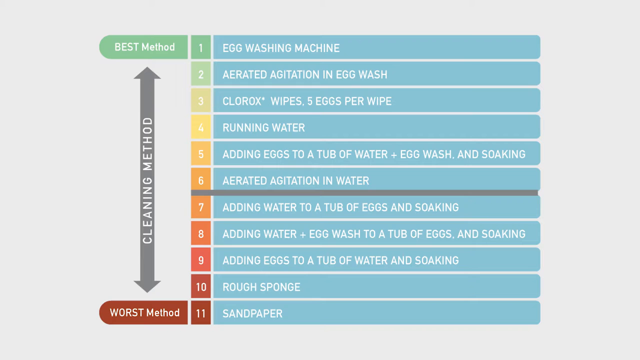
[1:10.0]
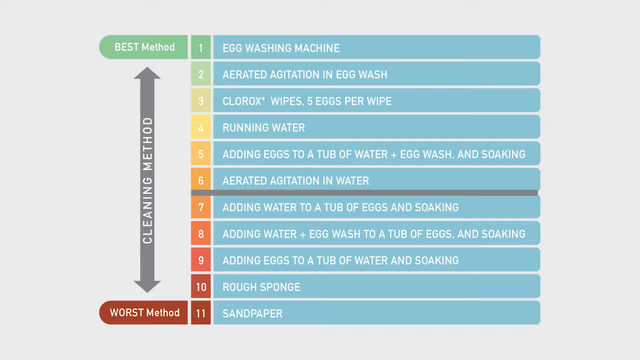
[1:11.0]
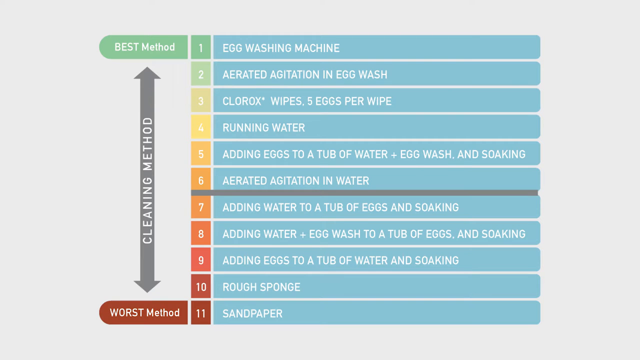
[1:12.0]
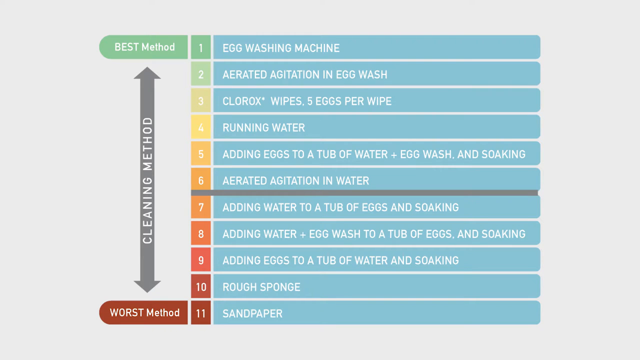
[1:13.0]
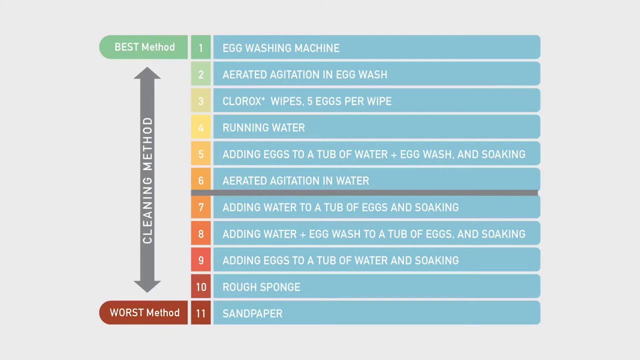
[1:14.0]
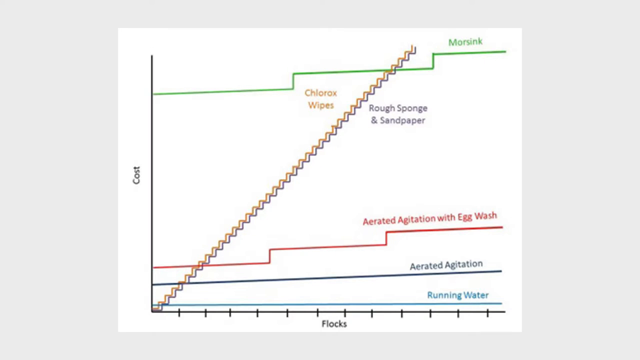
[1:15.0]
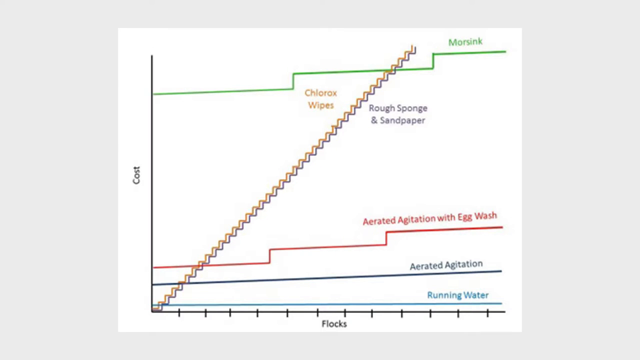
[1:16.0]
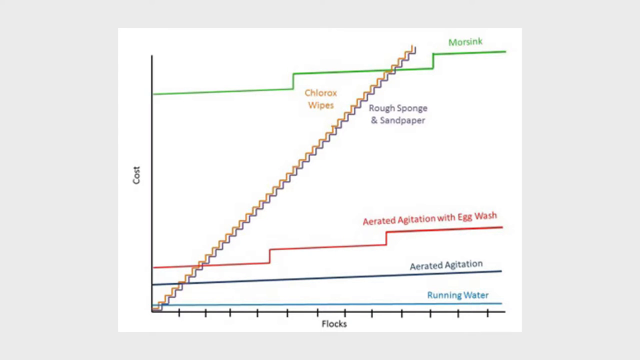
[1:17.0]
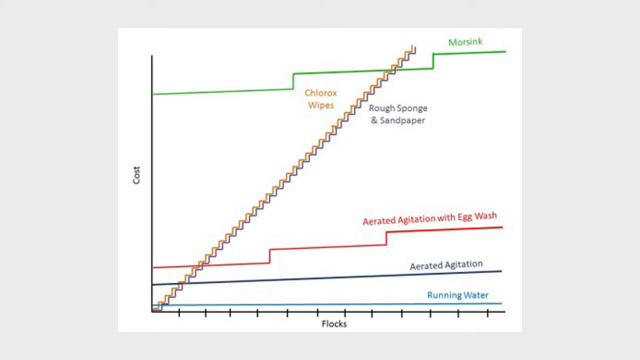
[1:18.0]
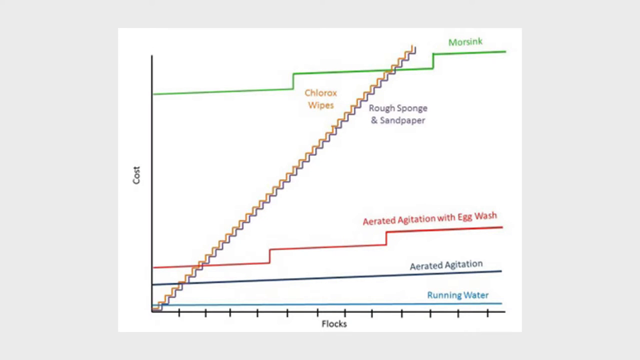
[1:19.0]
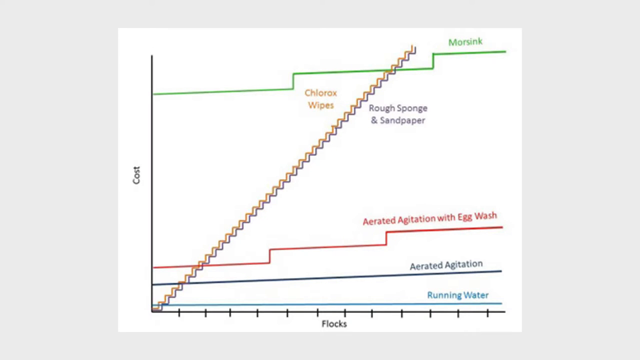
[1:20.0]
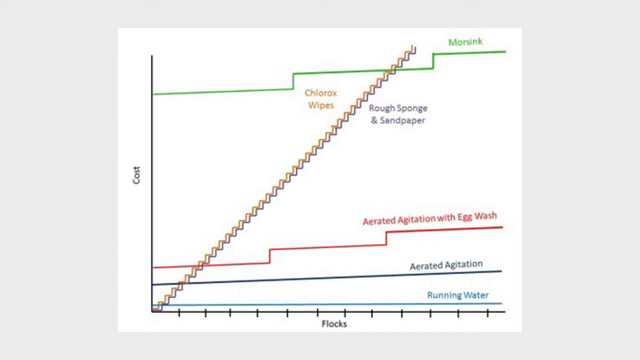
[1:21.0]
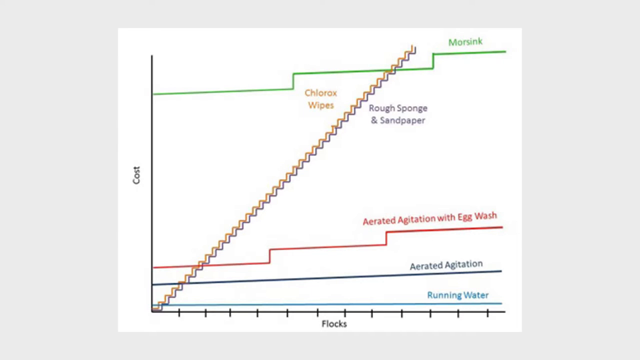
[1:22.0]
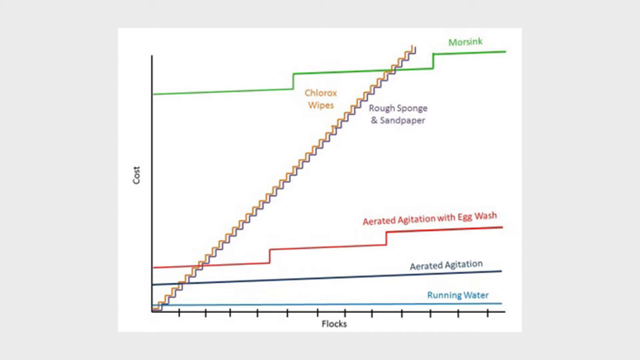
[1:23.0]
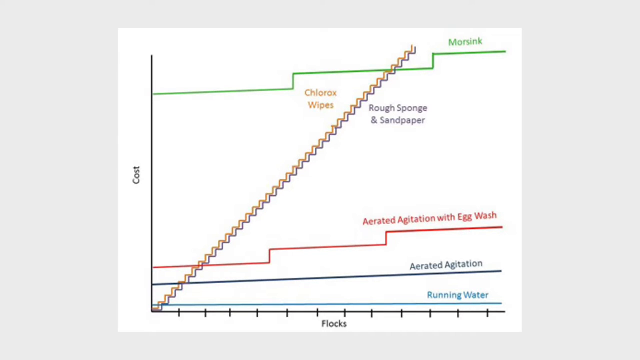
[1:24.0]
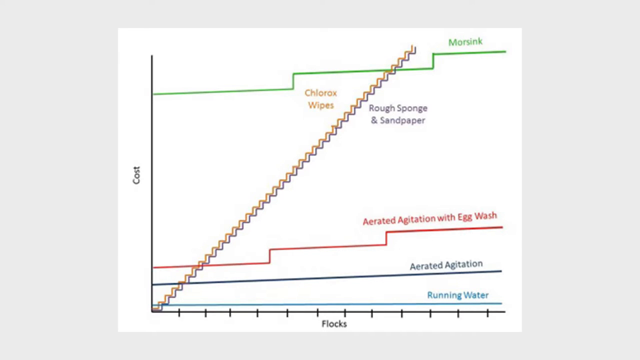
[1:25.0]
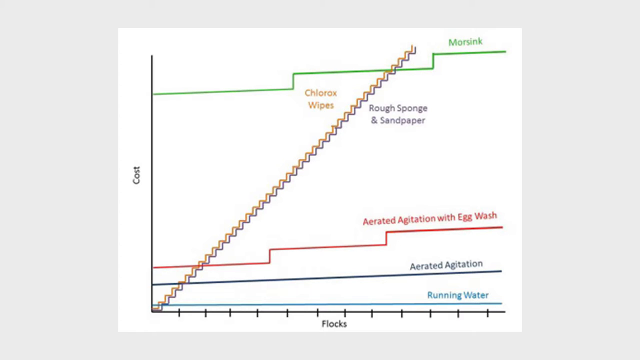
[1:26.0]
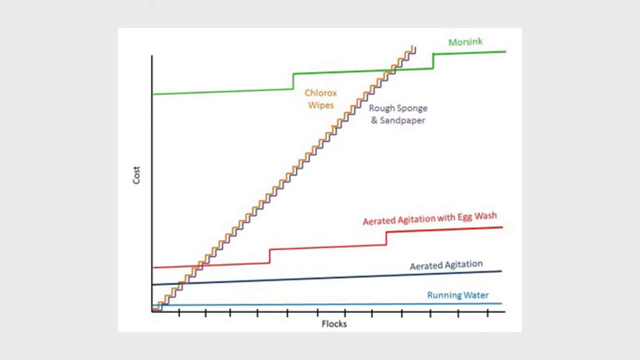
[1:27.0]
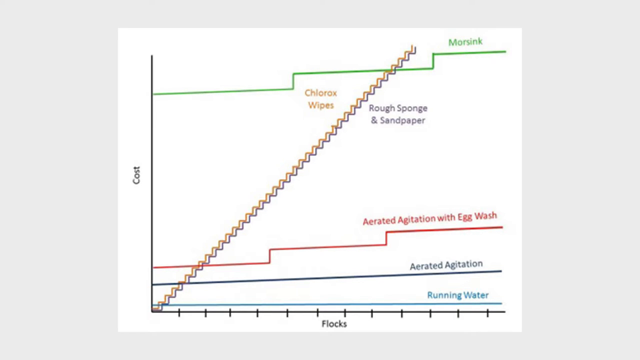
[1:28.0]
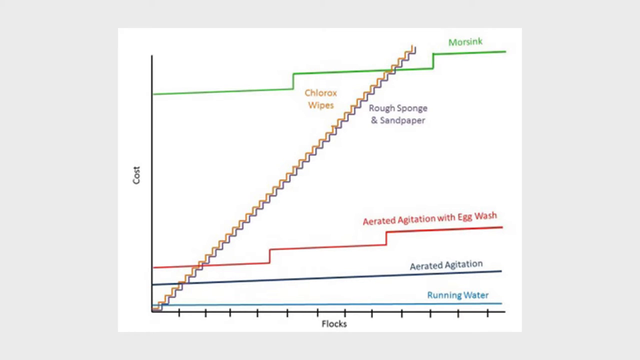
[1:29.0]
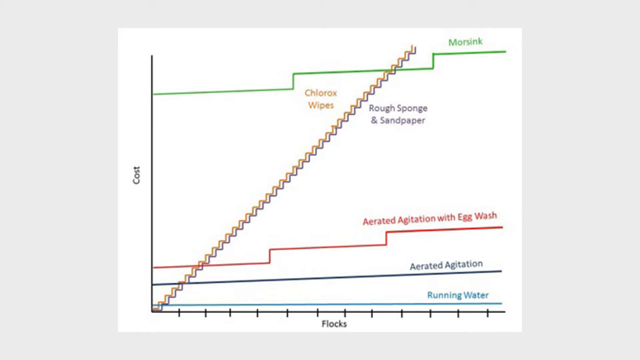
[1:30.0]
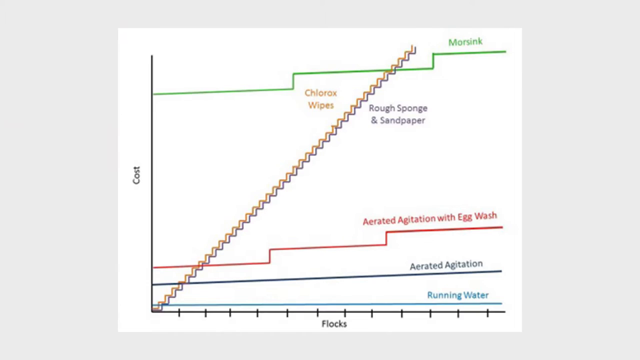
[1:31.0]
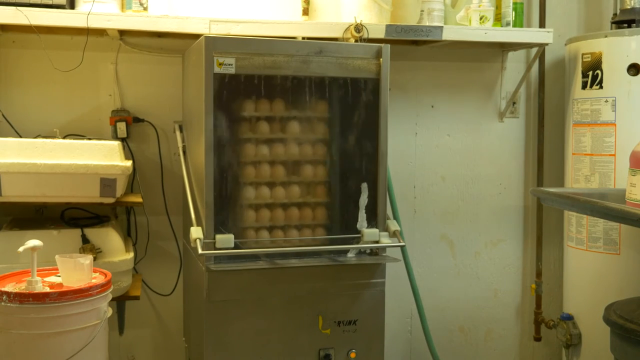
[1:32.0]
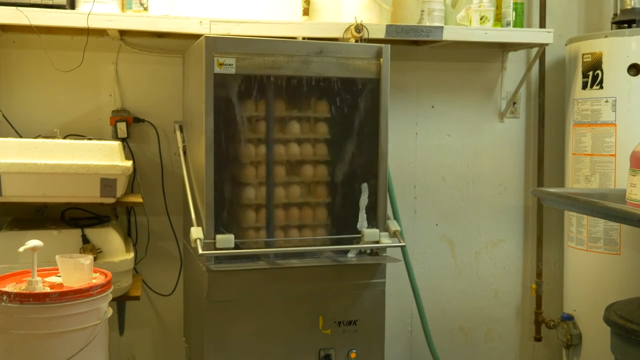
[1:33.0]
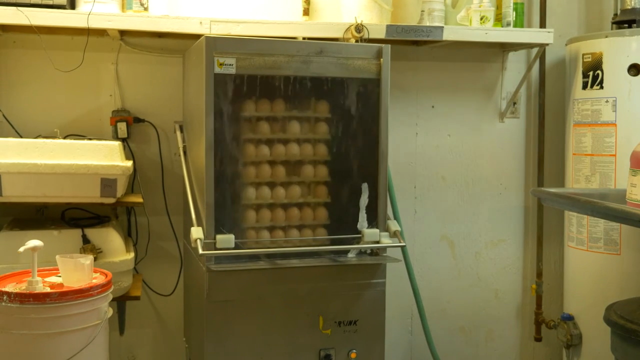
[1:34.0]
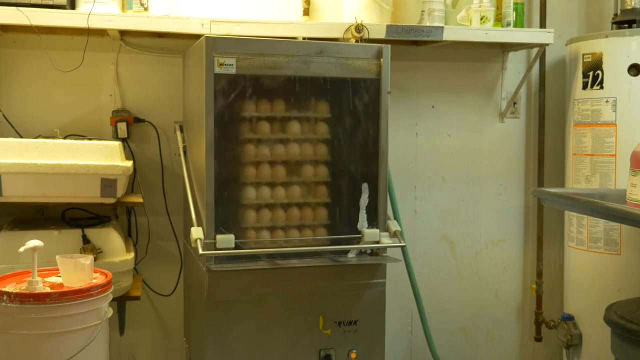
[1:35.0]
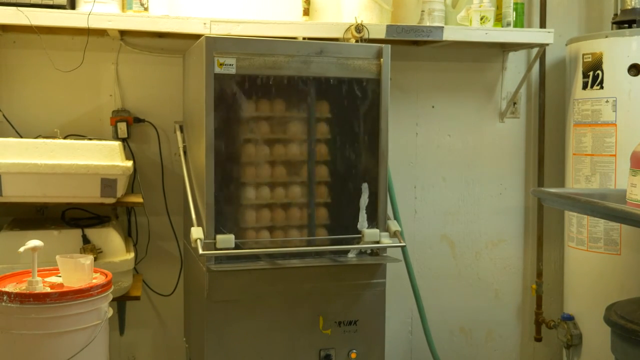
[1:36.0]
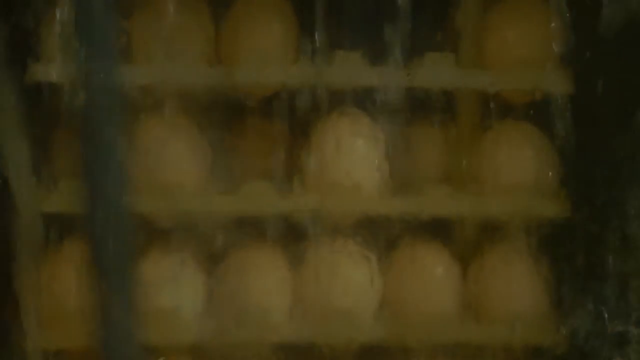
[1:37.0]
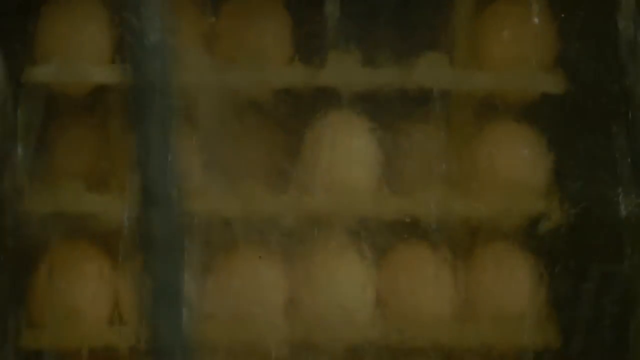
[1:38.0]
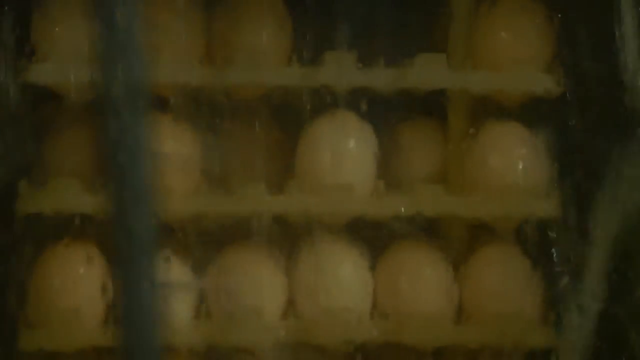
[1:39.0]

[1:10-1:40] On an off-white background, a green box above has white lettering reading "best method." Just below, a gray arrow pointing up and down has white lettering reading "cleaning method," and the red section at the bottom reads "worst method" in white lettering. Blue boxes on the right side have white lettering running down: "egg wash machine, aerated agitation and egg wash, Clorox wipes five eggs per wipe, running water, adding eggs to a tub of water plus egg wash and soaking, aerated agitation and water, adding water to a tub of eggs and soaking, adding water plus egg wash to a tub of eggs and soaking, adding eggs to a tub of water and soaking, rough sponge, sandpaper." The colors run from green through yellow and orange to red at the very bottom, with numbers 1 to 11. Next, a white squared section in the center shows a graph. A black line on the left side says "cost." A green jagged line is up top, with green letters at the top right. Yellow lettering says "Clorox wipes," and black lettering to the right of it says "rough sponge and sandpaper." There is an orange, gray squiggly line going upwards. Red lettering toward the bottom says "aerated agitation with egg wash," and below that, with a black line to the right, it says "aerated agitation." A blue line below that says "running water." A black line at the bottom has little notches, with black lettering reading "flocks."